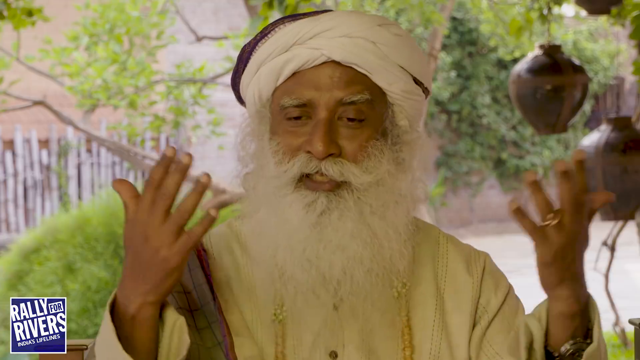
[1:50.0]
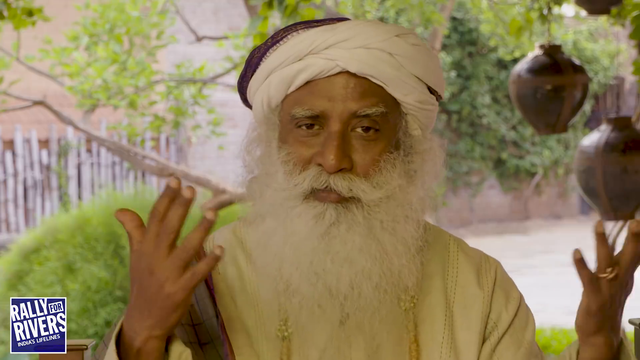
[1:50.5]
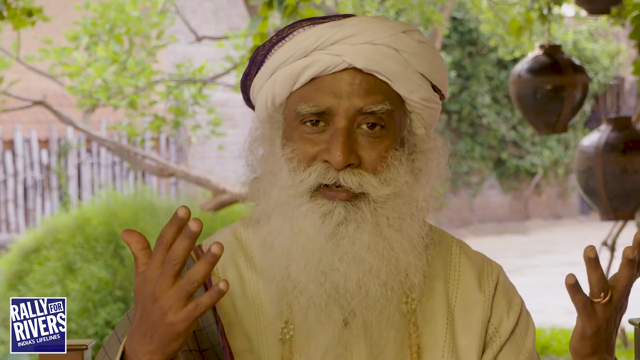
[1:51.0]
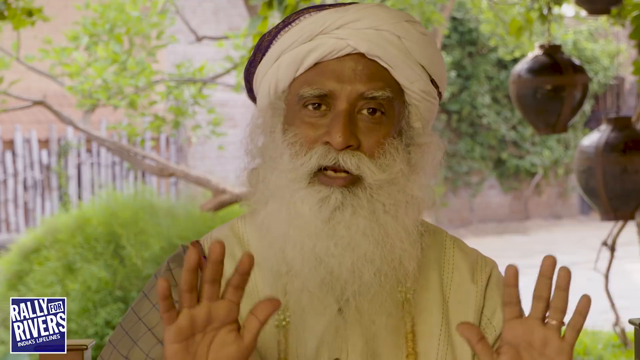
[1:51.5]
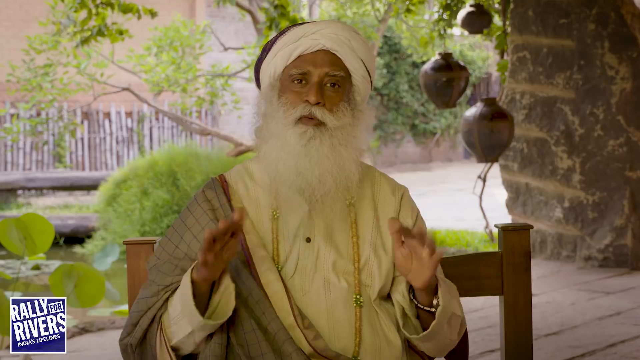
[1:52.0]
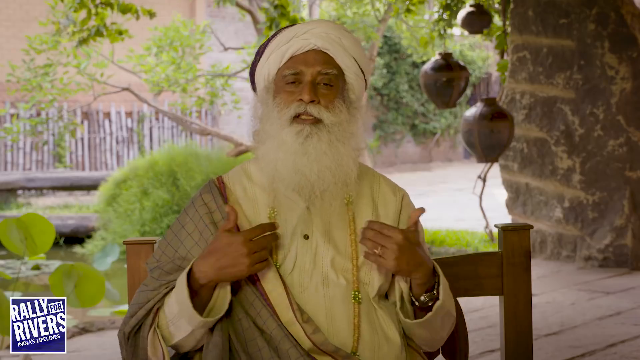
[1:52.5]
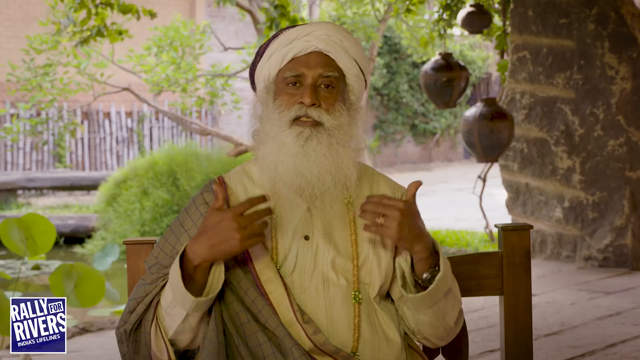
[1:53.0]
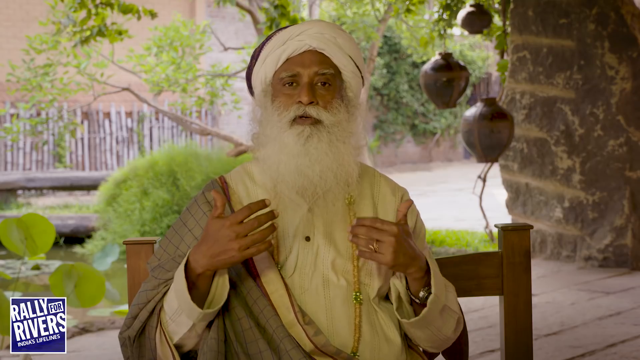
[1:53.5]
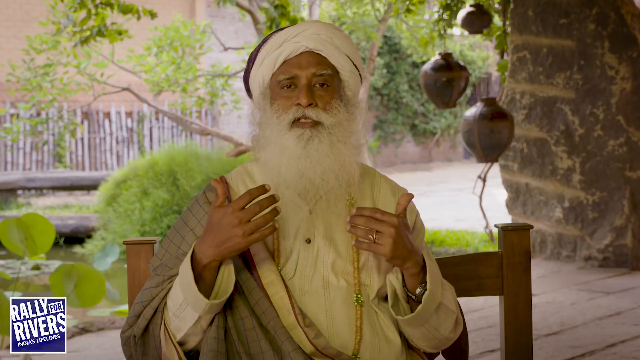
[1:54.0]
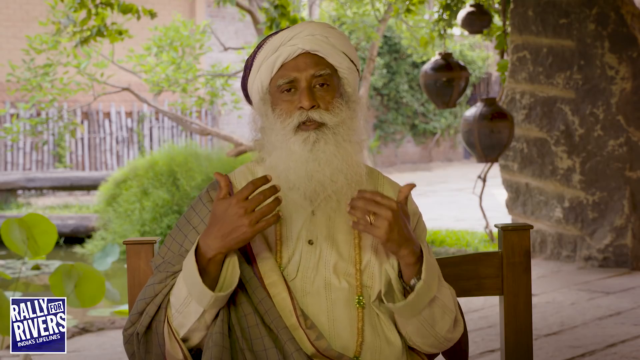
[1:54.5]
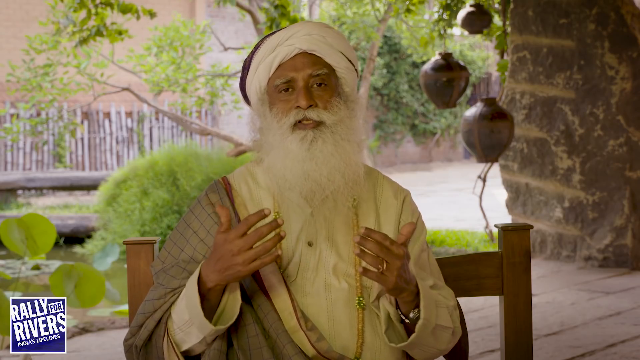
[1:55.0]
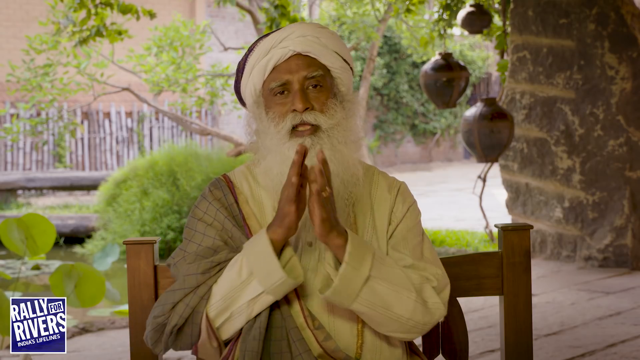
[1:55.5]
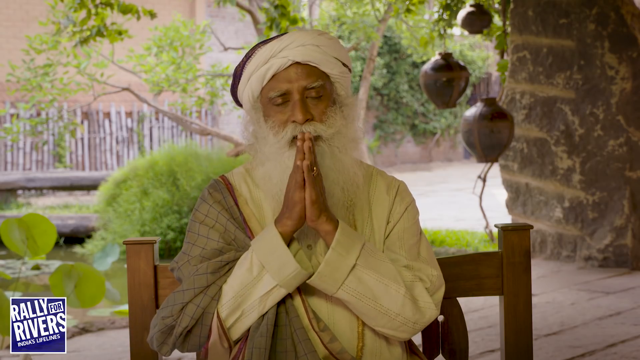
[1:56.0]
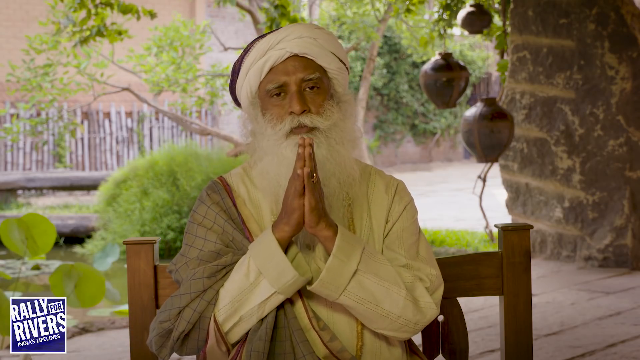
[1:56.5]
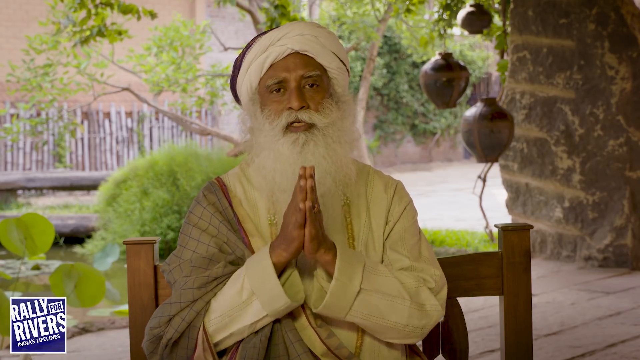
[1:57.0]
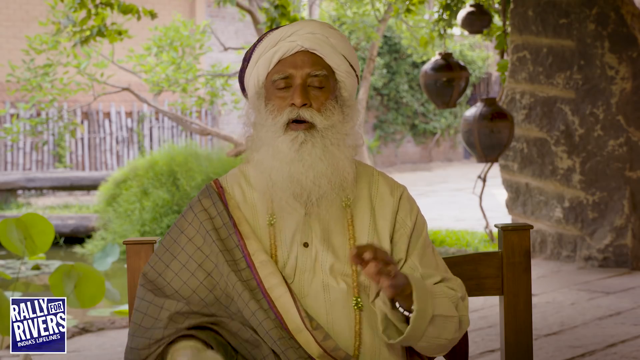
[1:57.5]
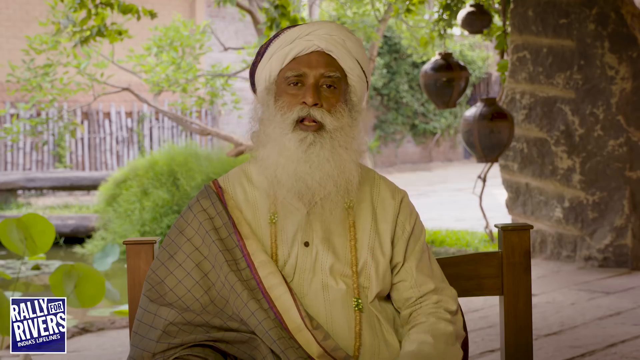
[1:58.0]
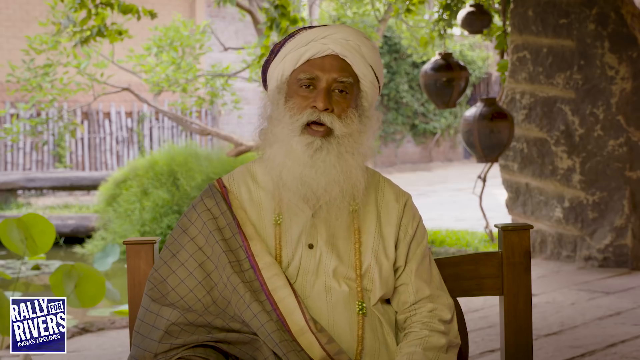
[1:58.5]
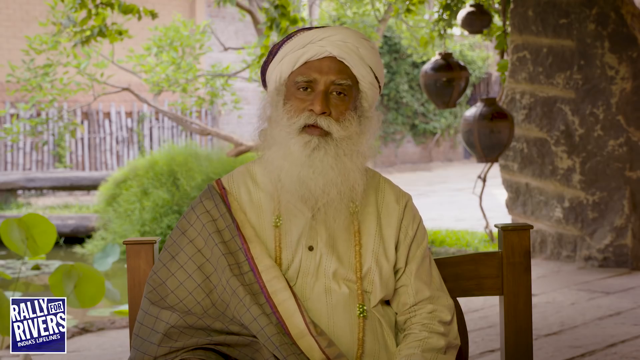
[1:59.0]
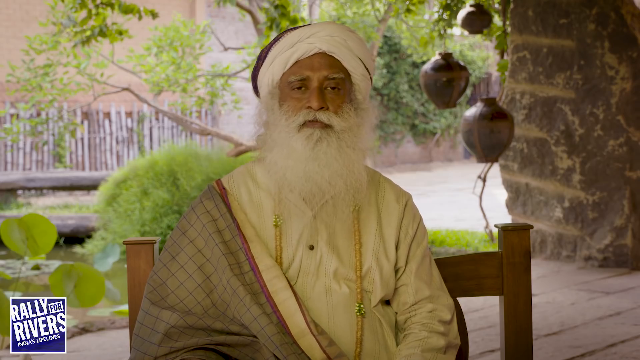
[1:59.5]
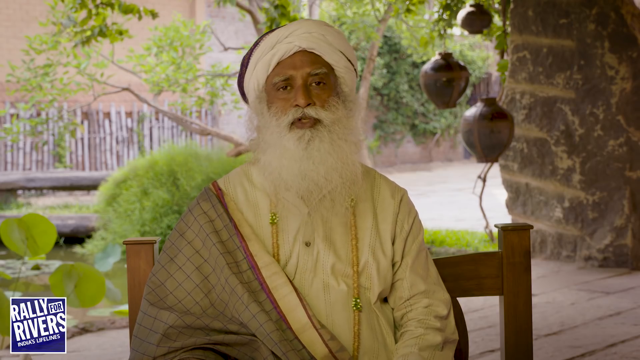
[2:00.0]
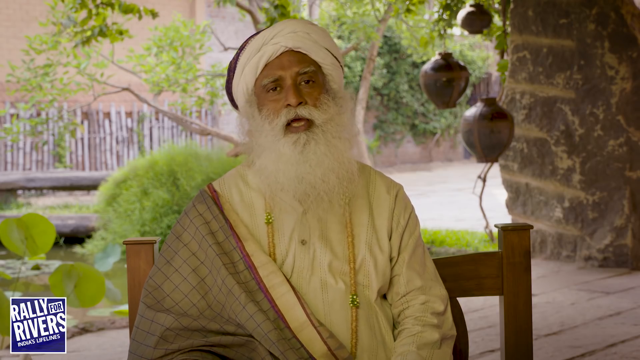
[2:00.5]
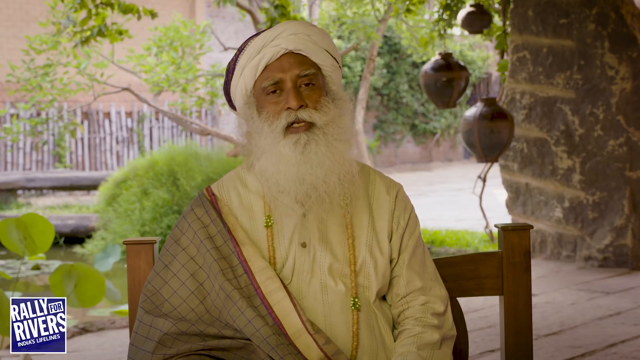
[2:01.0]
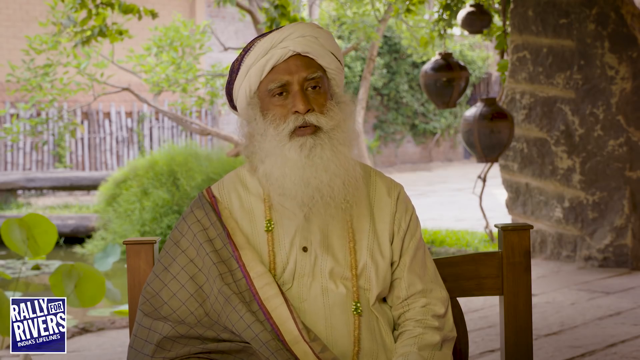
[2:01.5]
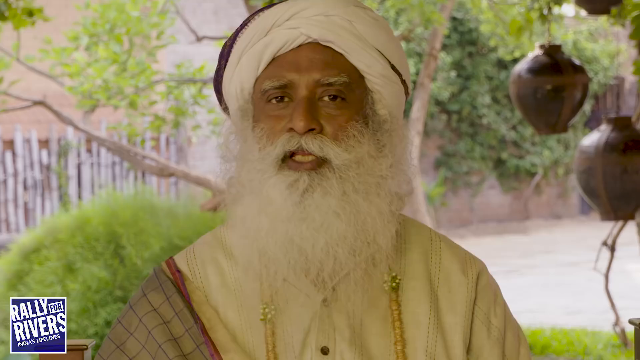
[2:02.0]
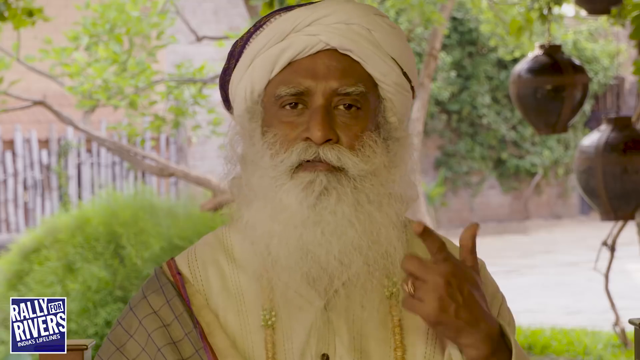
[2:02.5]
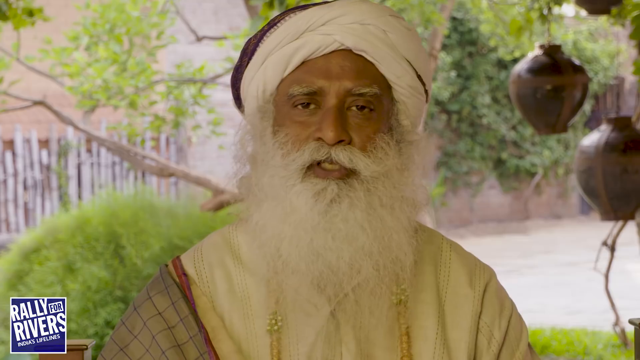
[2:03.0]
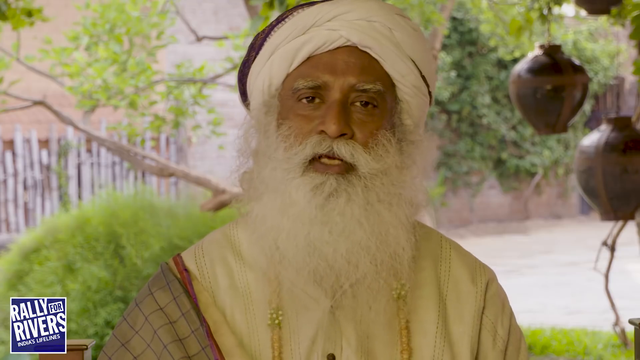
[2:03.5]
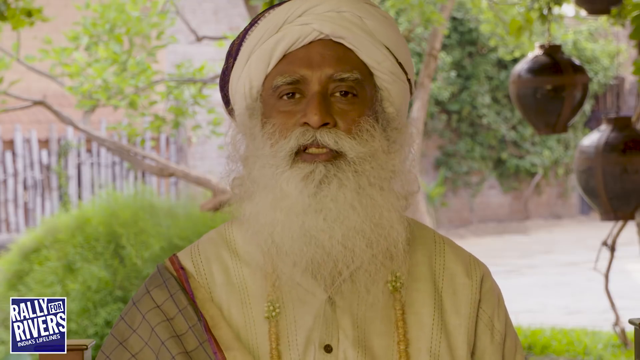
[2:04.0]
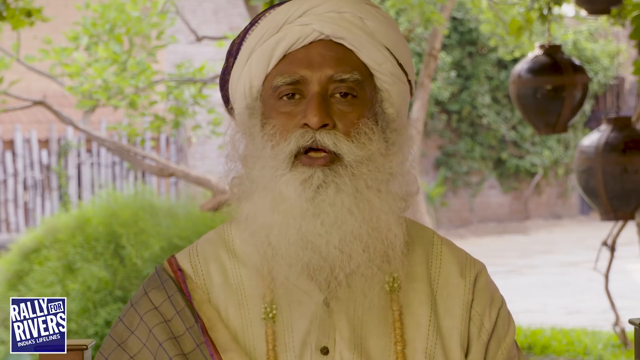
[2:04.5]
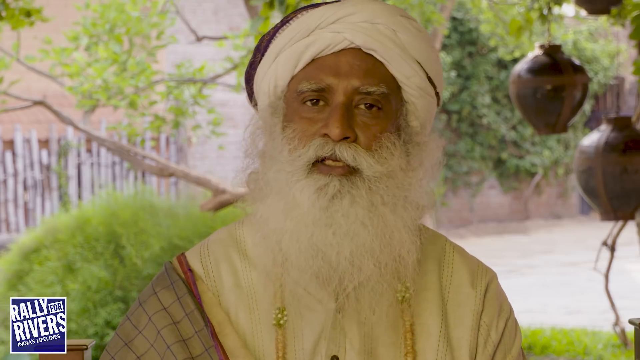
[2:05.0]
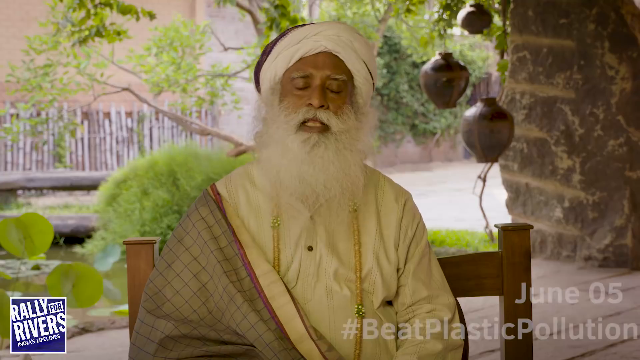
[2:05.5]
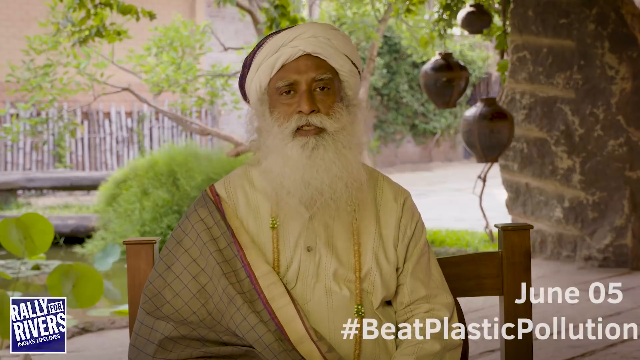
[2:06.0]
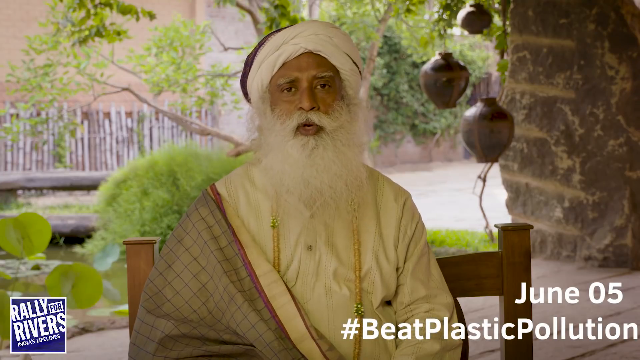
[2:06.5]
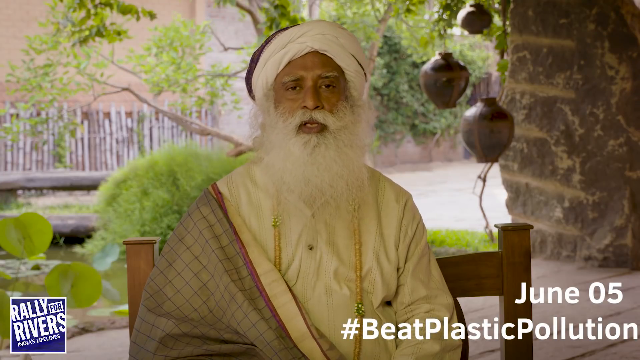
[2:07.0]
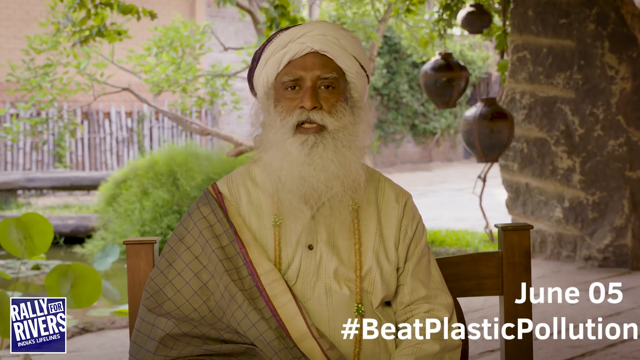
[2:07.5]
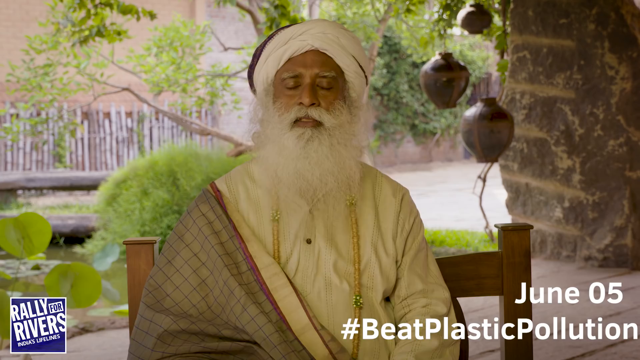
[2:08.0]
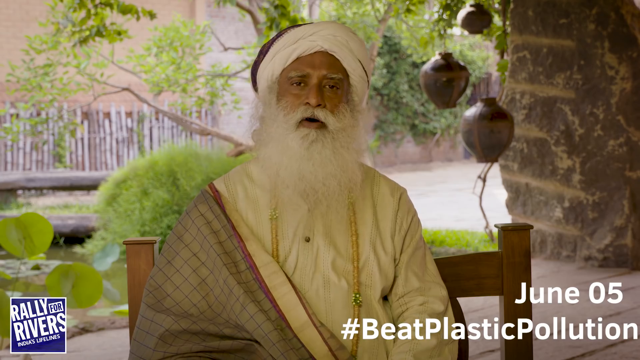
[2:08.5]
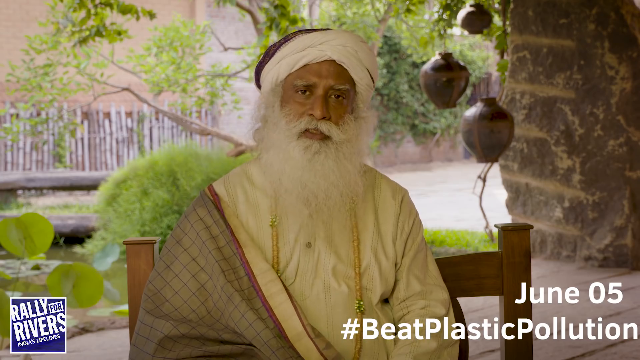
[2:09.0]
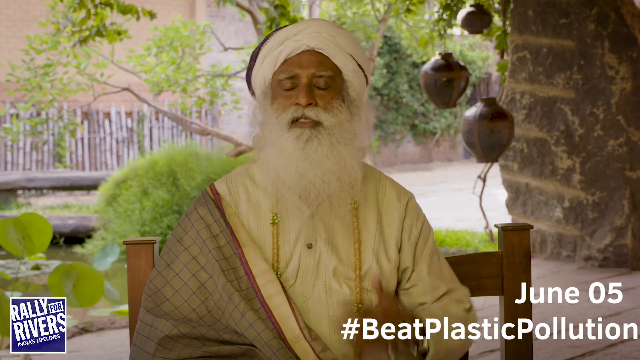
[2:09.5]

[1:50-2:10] The Indian man is sitting and talking to the camera. The video appears to be by Rally for Rivers.